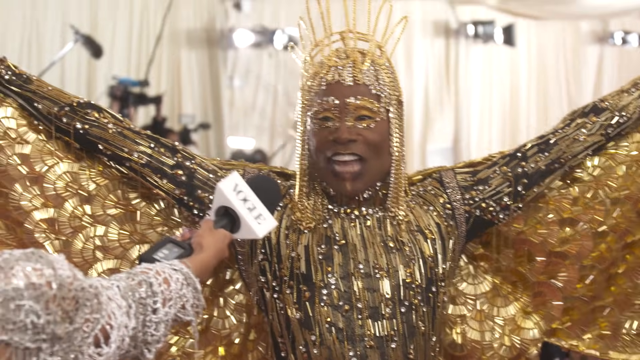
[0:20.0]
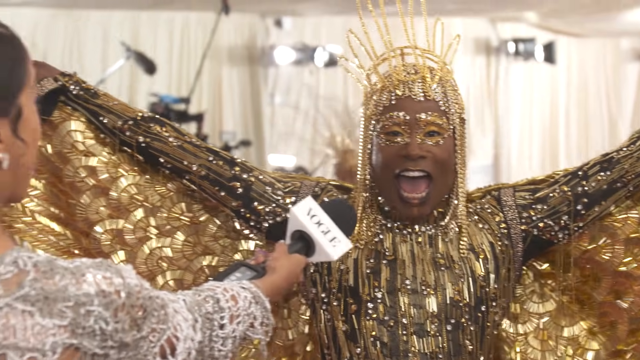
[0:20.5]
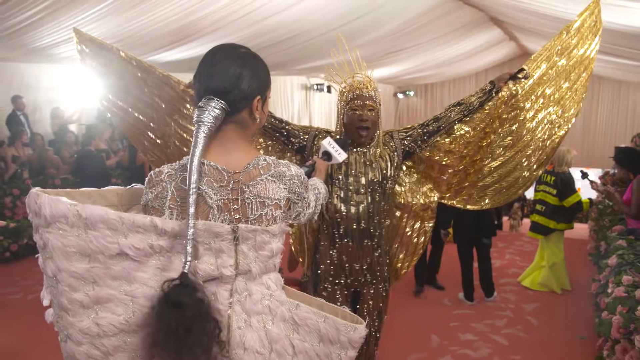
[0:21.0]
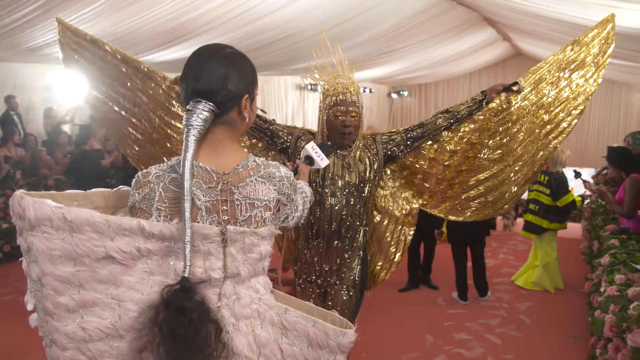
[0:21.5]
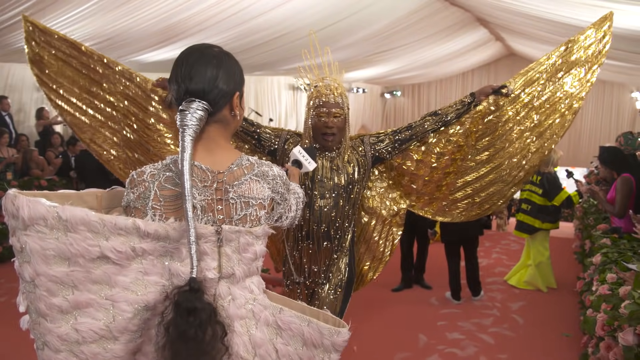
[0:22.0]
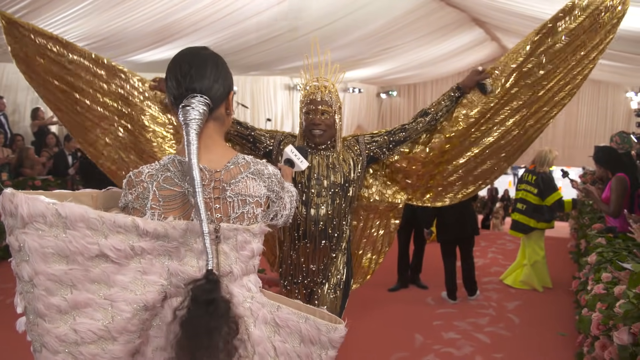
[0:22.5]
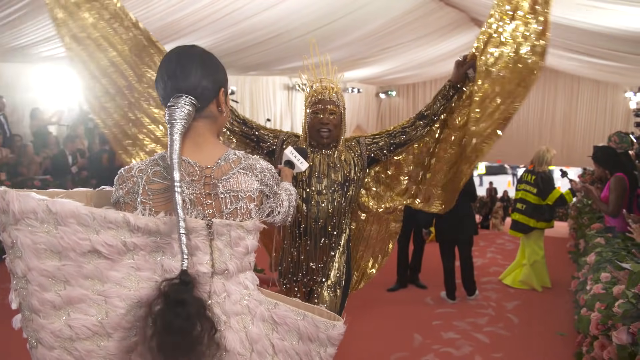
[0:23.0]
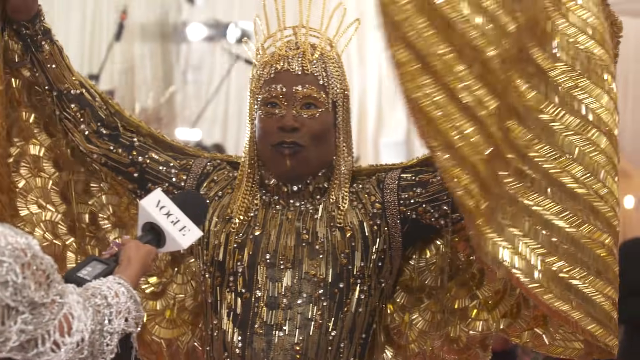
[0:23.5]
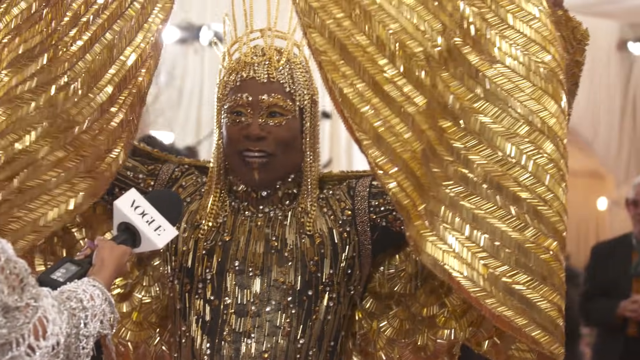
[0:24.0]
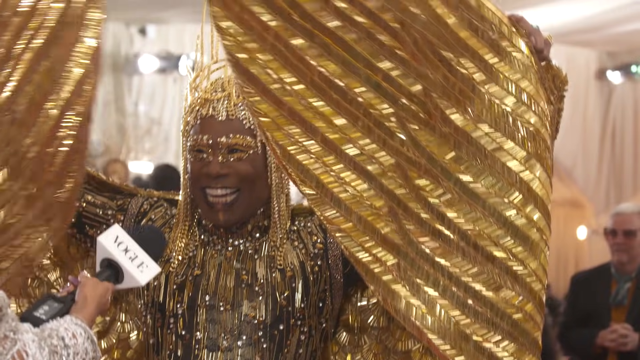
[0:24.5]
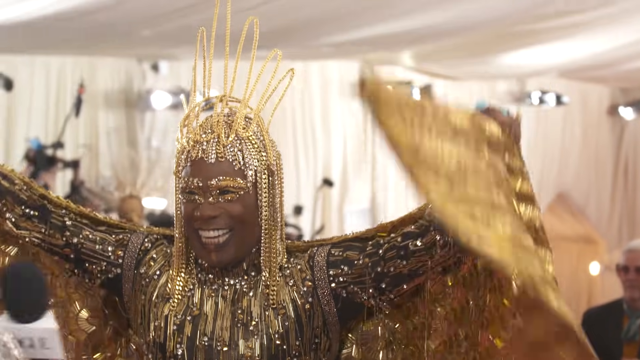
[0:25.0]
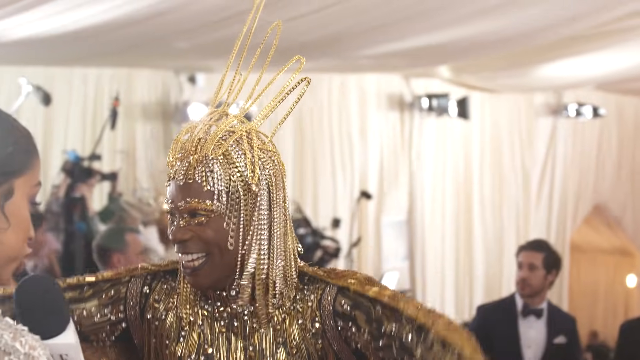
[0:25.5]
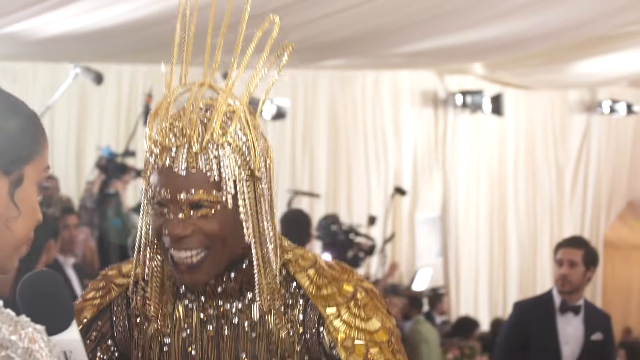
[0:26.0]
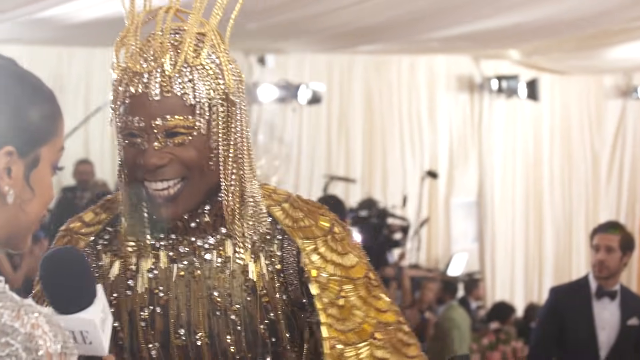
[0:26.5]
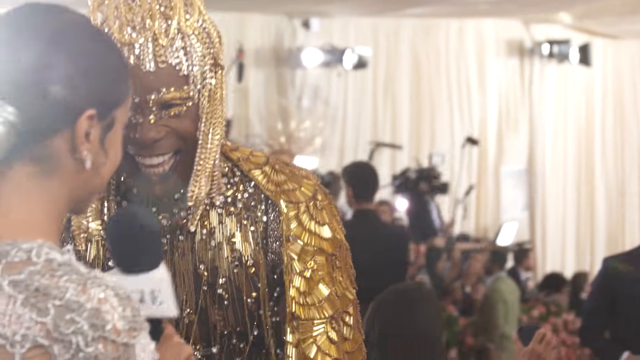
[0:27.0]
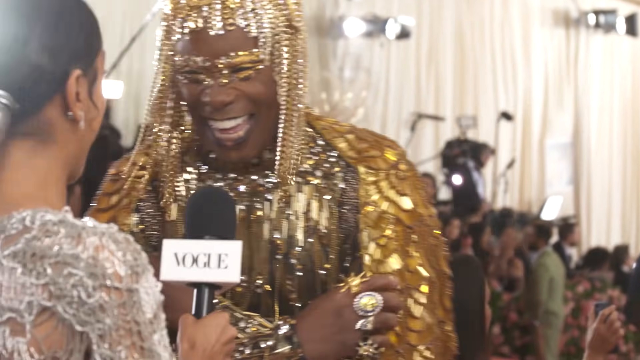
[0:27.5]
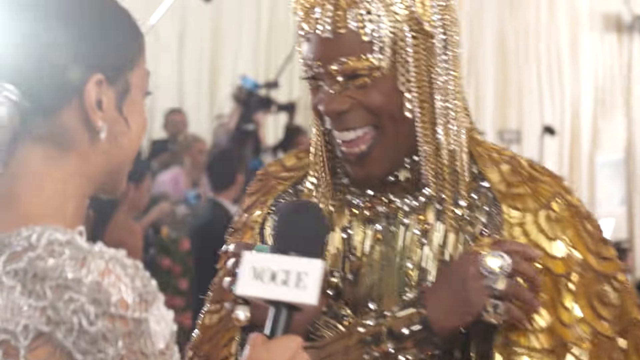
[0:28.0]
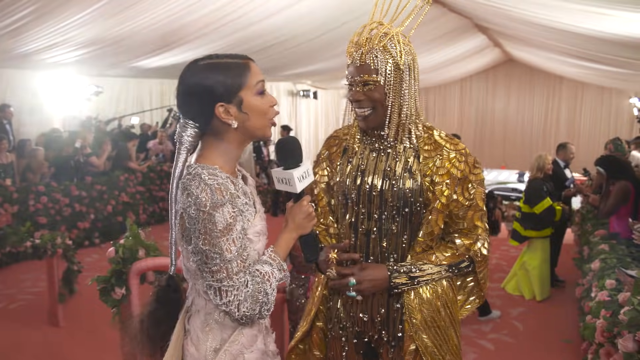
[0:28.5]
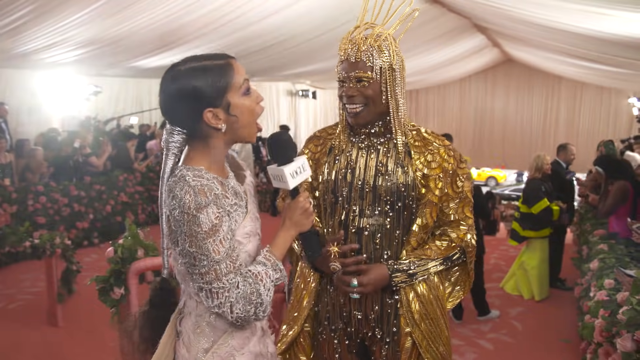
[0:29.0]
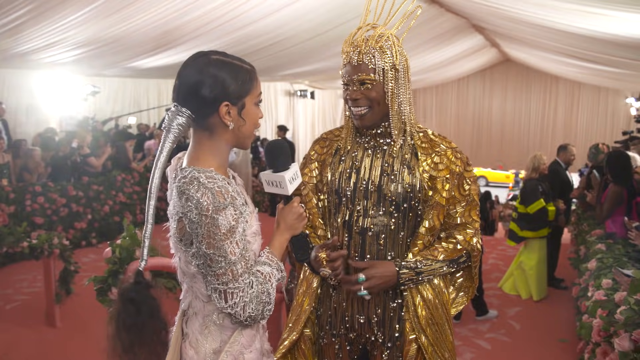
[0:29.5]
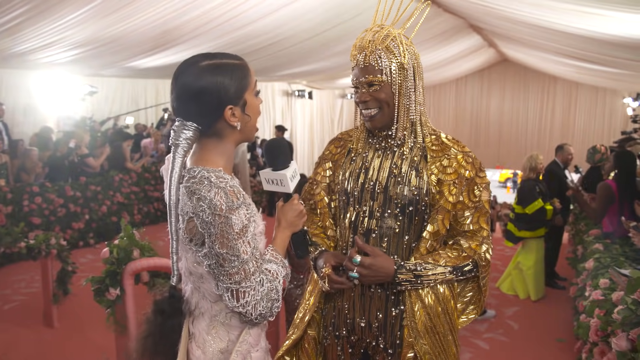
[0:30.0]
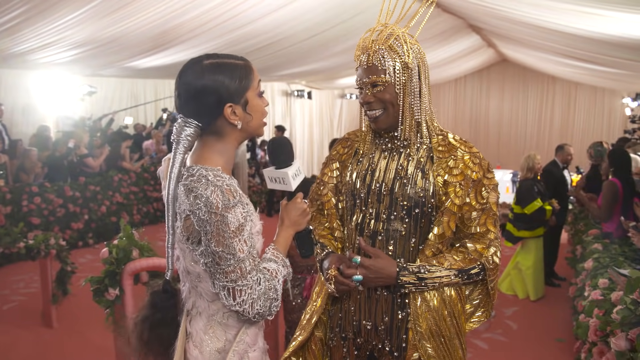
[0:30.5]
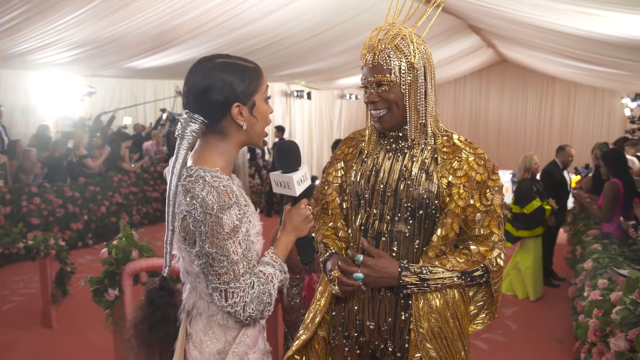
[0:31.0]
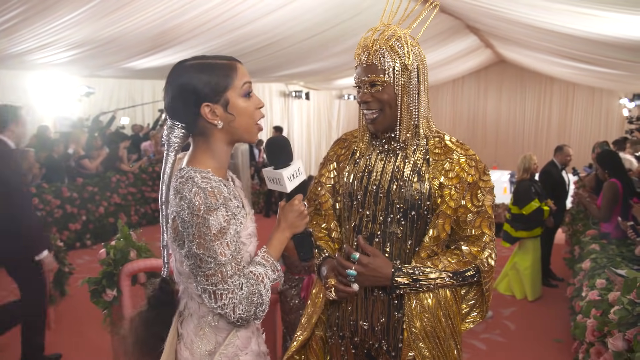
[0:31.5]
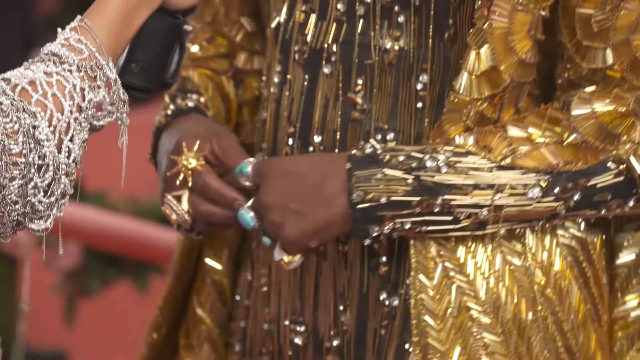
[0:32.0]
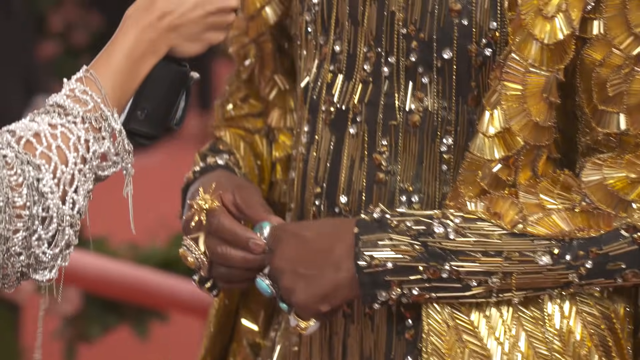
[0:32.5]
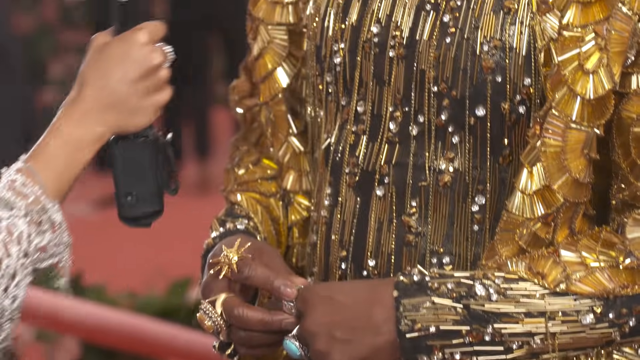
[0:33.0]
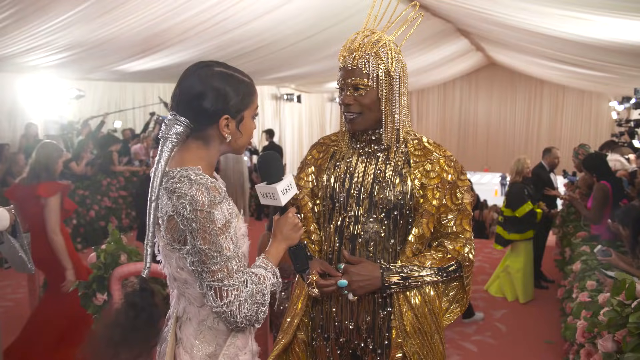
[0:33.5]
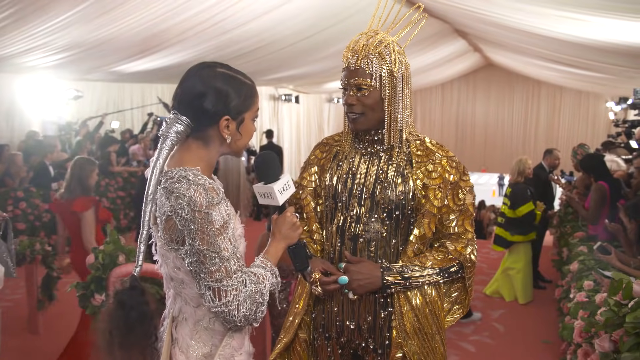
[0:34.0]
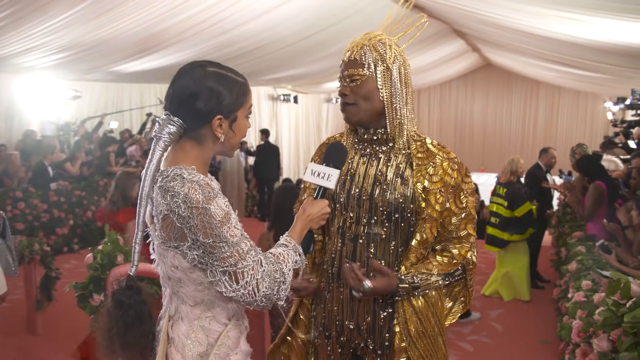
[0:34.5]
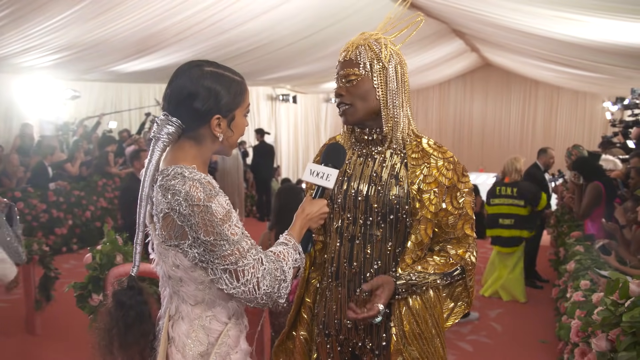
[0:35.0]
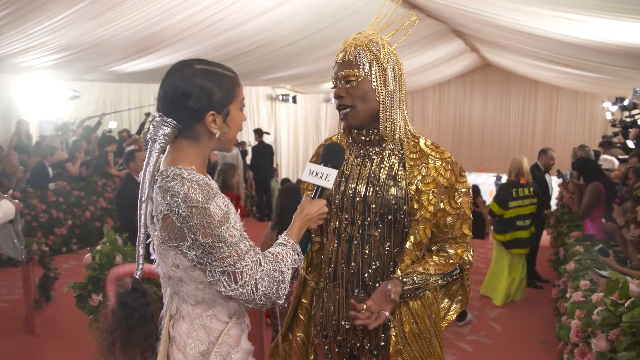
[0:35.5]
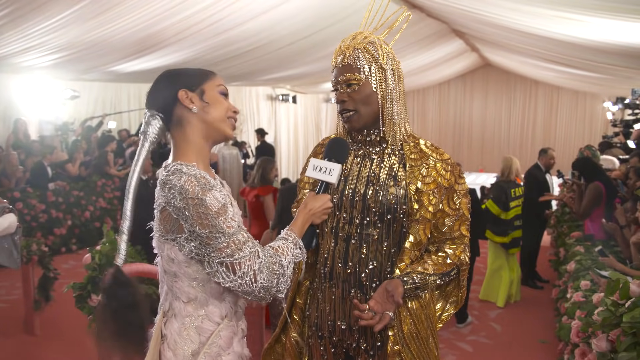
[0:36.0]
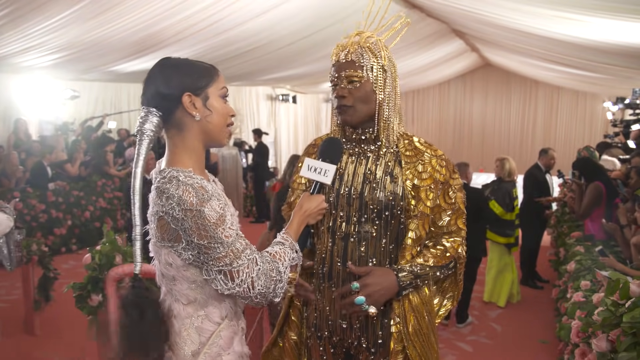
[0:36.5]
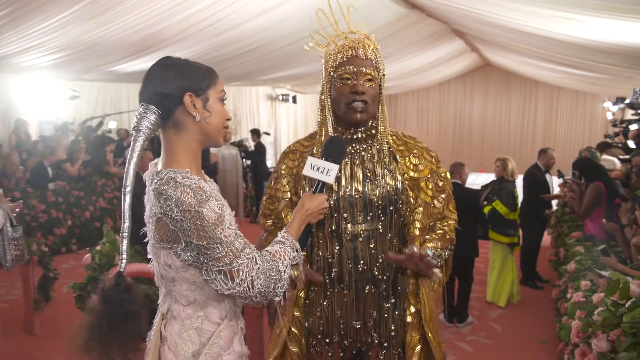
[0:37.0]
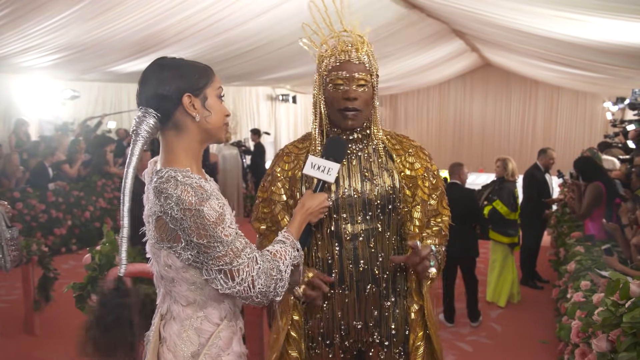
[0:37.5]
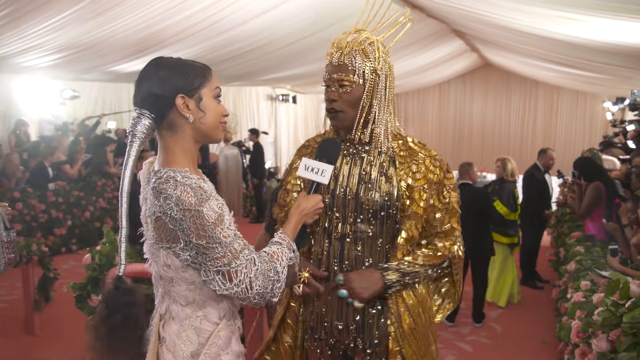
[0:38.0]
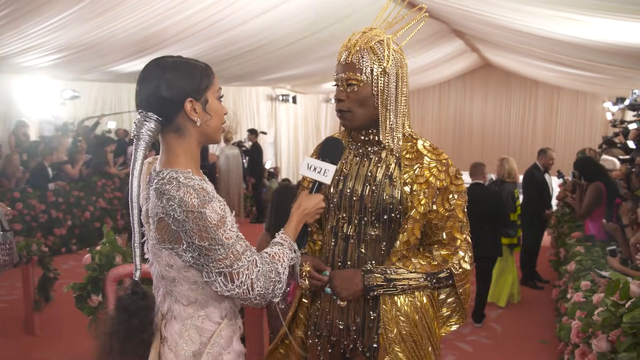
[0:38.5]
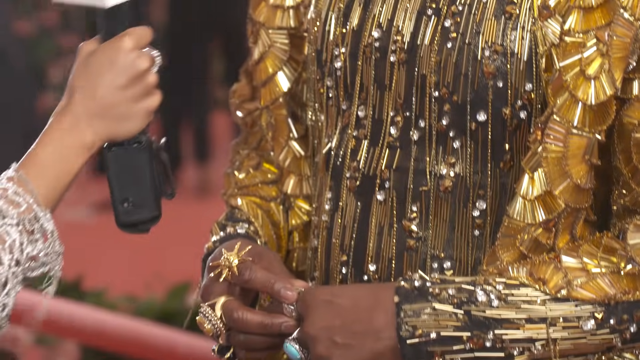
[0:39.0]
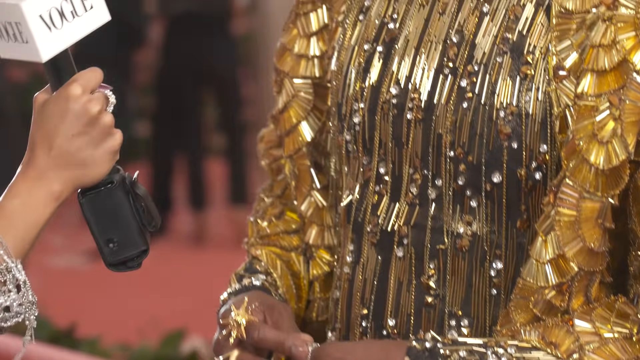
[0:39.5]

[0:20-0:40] Billy stands next to the reporter with his arms spread out away from his body in a V formation, spreading his wings out from his body as if he is about to take off in flight like a golden bird of prey. He laughs and talks to the reporter, using his hands as he speaks. He looks around the room from left to right and then back at the reporter, still smiling. The reporter smiles back at him and holds the microphone up to his face as he speaks.